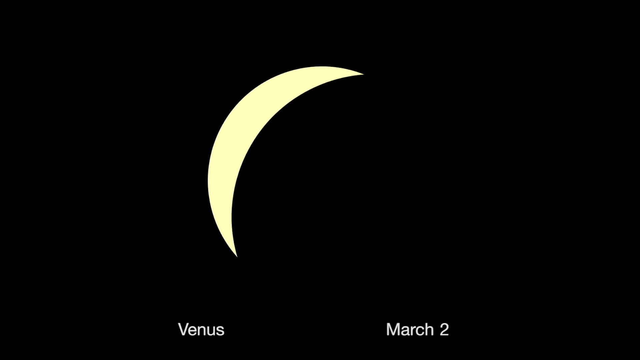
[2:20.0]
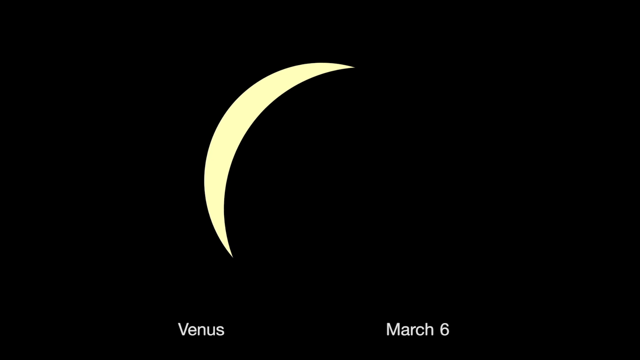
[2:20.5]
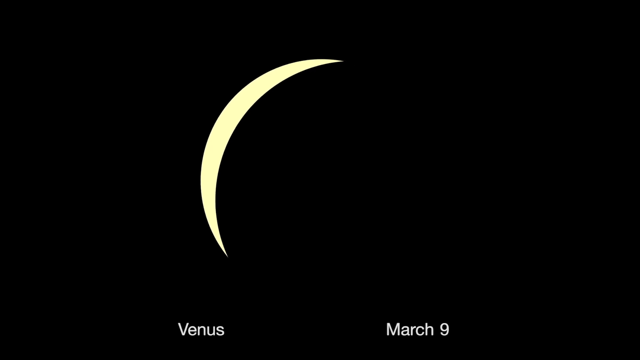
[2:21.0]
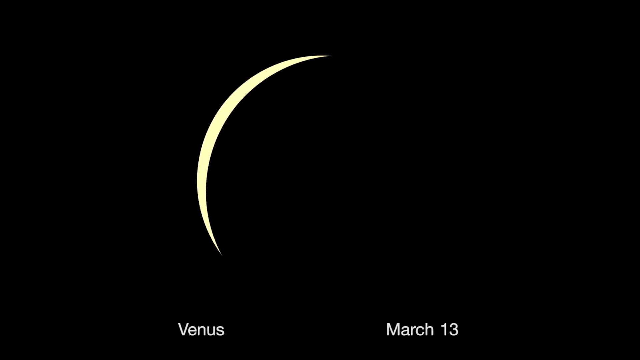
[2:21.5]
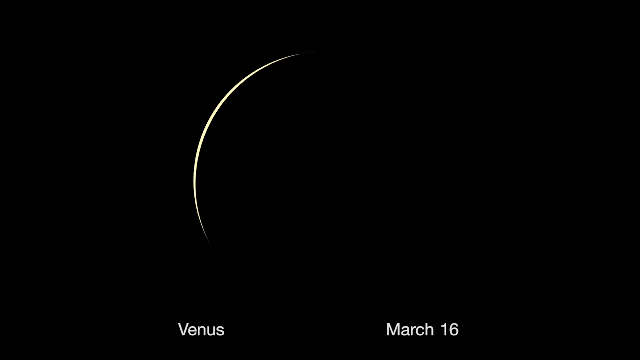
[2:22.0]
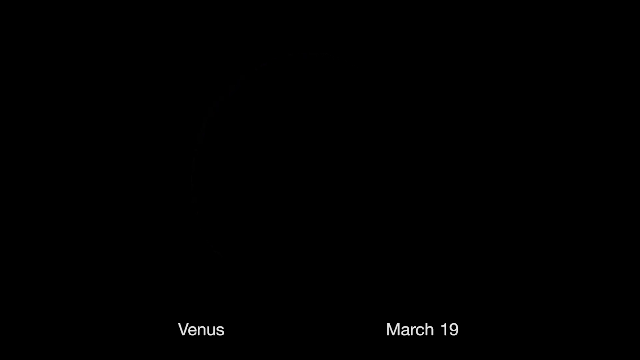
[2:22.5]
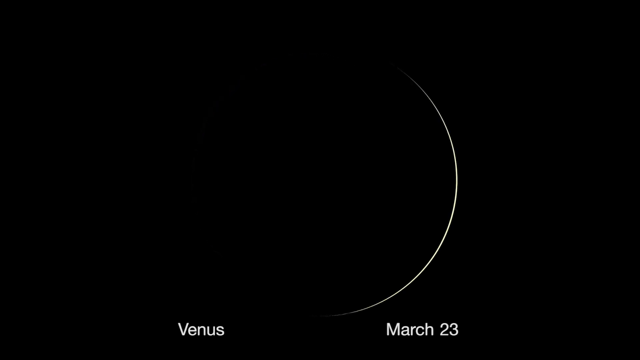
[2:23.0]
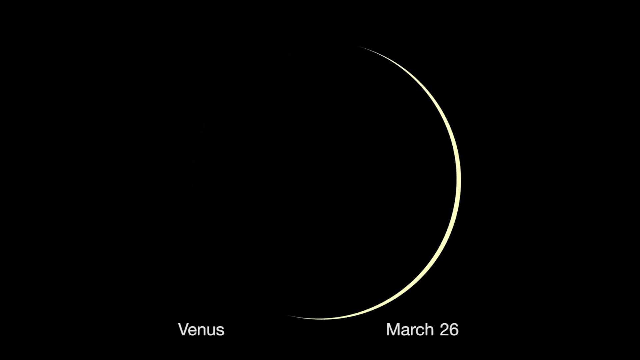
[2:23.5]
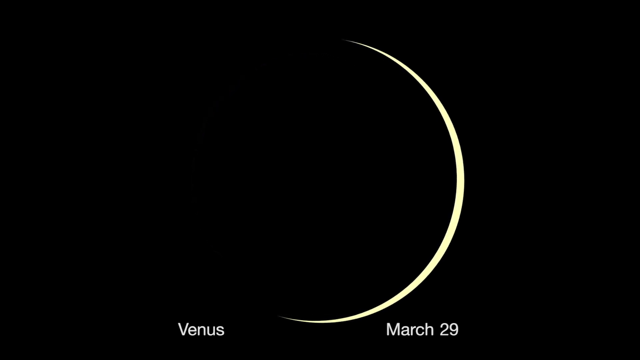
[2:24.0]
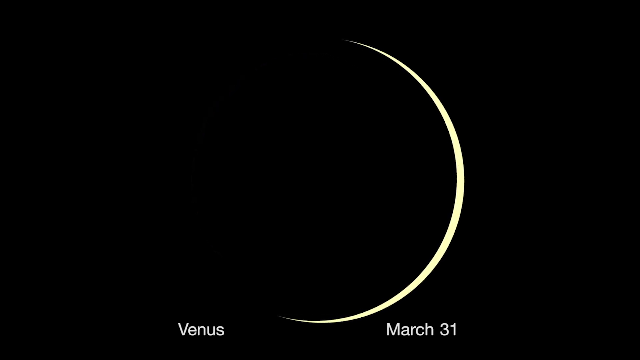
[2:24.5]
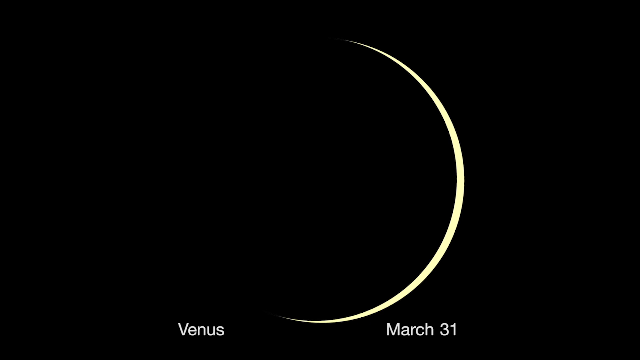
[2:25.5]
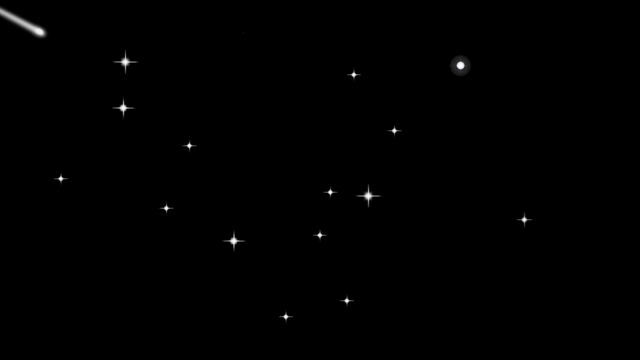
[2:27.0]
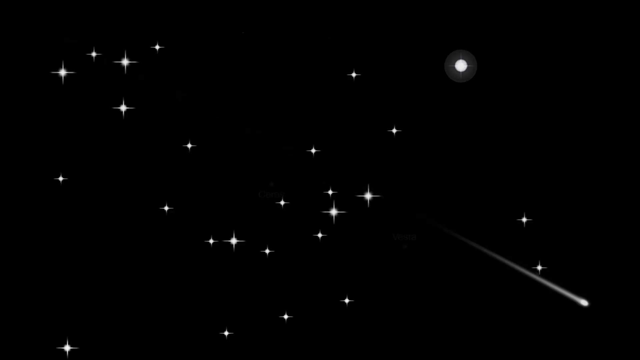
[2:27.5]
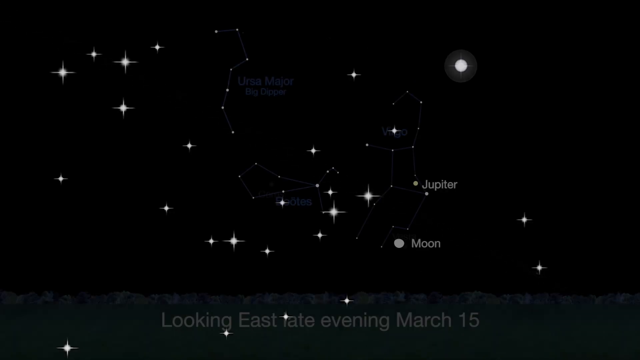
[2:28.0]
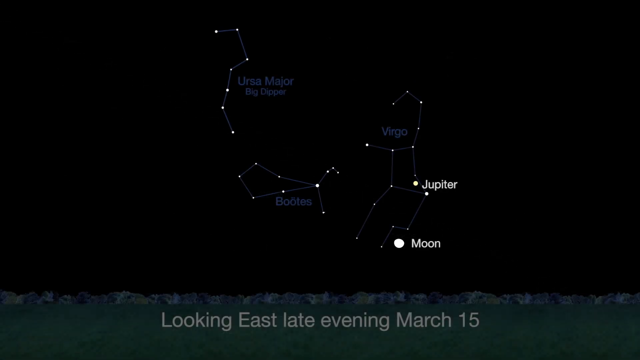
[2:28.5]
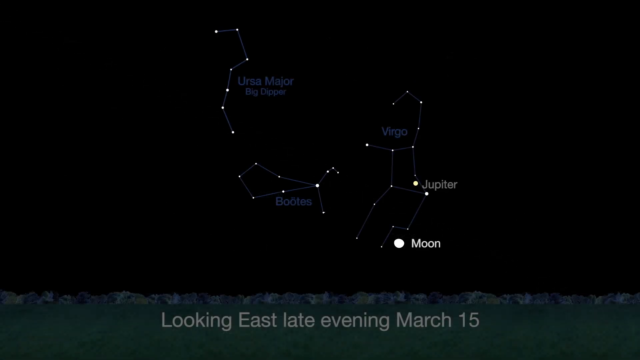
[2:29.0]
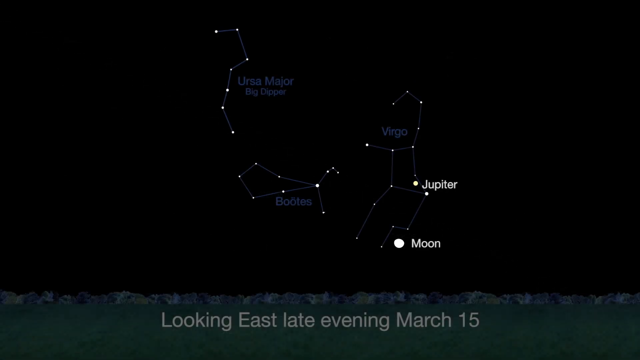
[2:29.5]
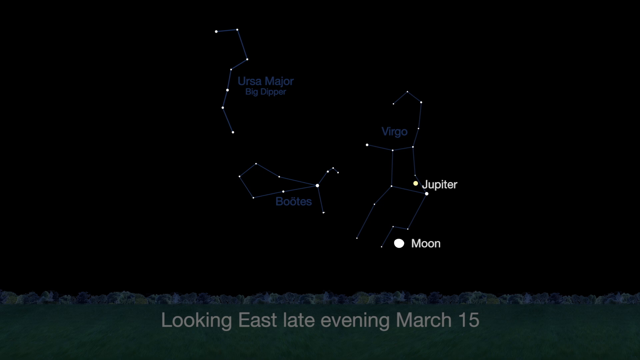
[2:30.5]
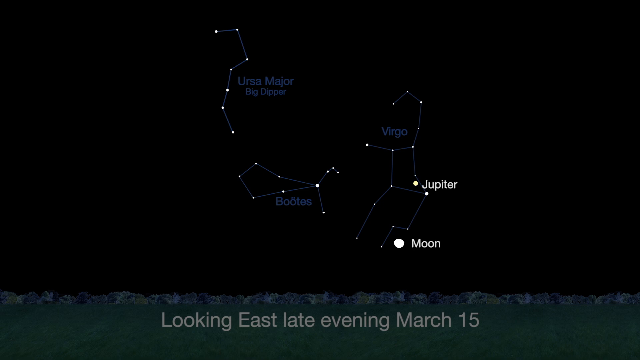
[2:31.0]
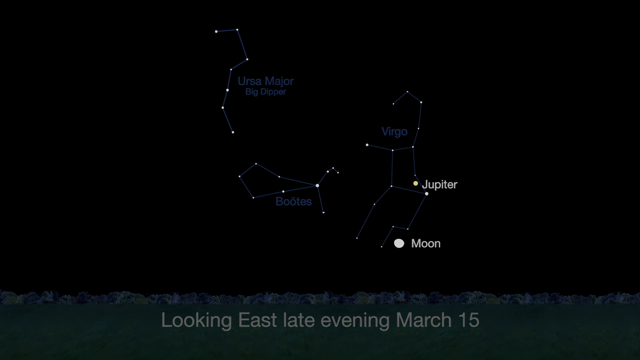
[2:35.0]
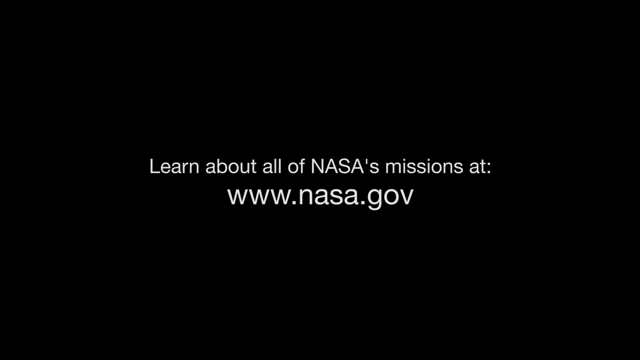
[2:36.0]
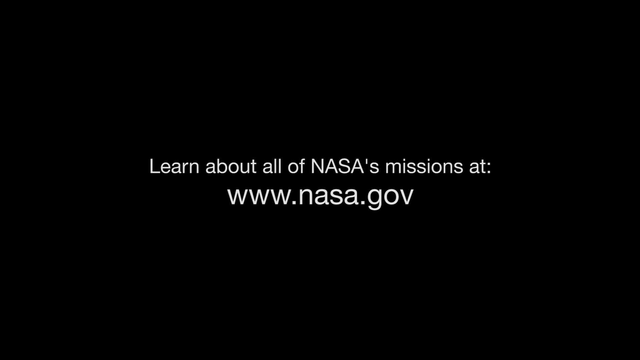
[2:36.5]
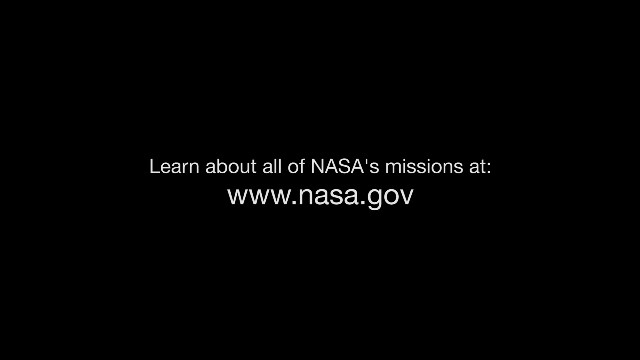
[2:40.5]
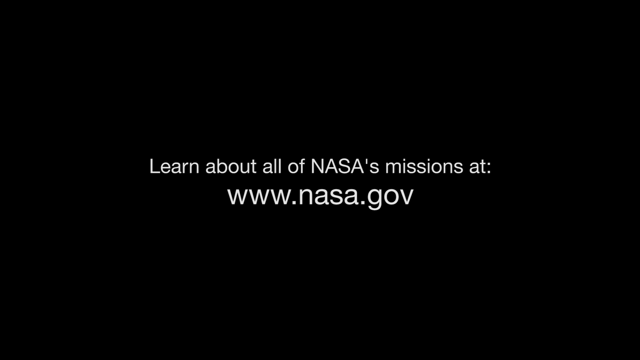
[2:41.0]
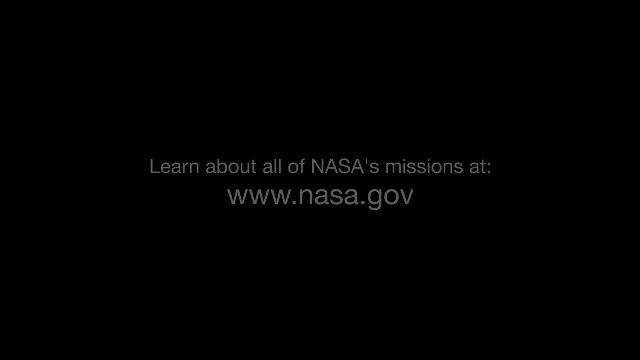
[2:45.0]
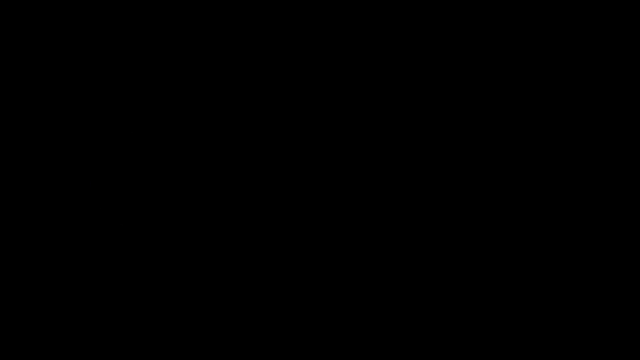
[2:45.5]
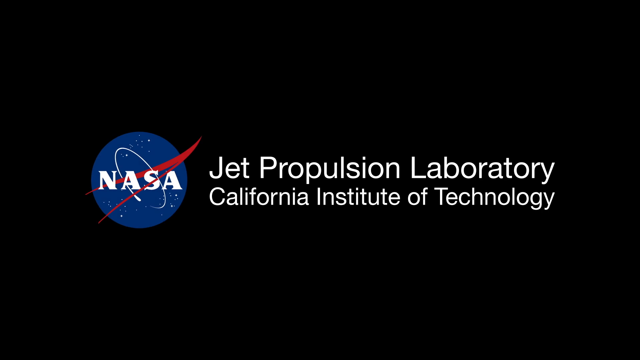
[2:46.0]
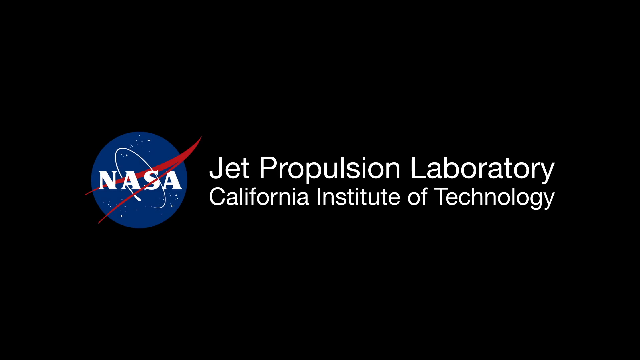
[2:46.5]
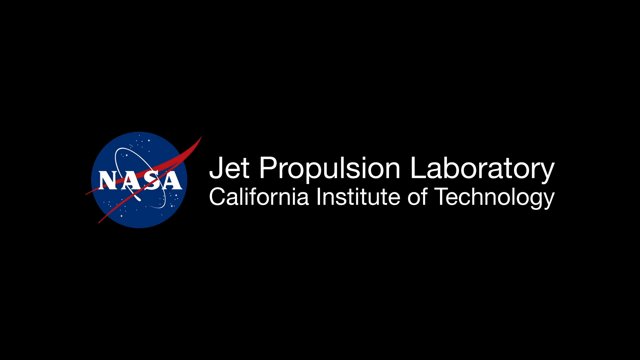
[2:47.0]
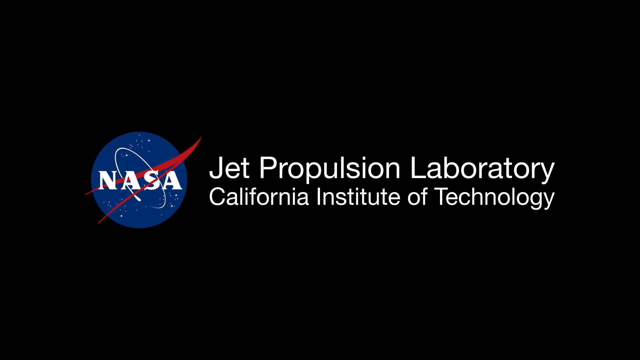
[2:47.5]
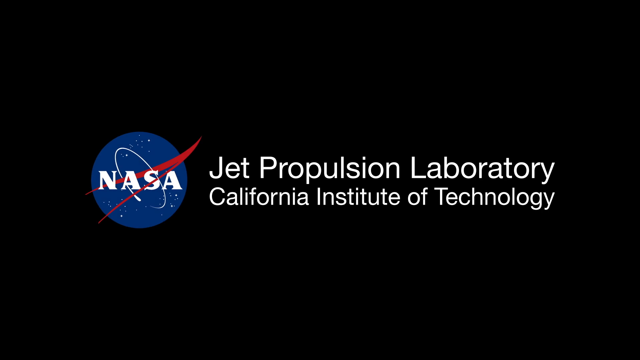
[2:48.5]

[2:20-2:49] Venus is shown over different days, with its phases changing. Different planets appear, including Jupiter, Uranus and Saturn. A screen with a white background shows "www.nasa.gov" and says NASA and propulsion laboratory. A moon appears in the middle of the scene against a pitch-black background with no stars or constellations.